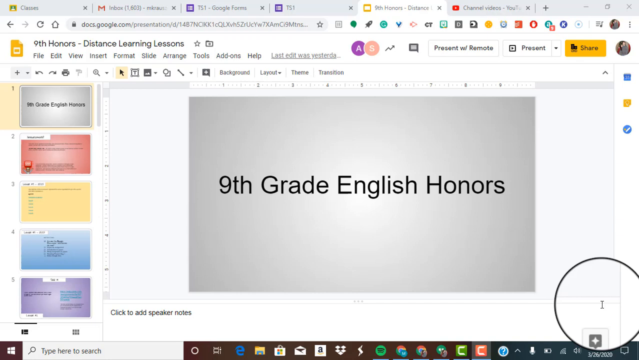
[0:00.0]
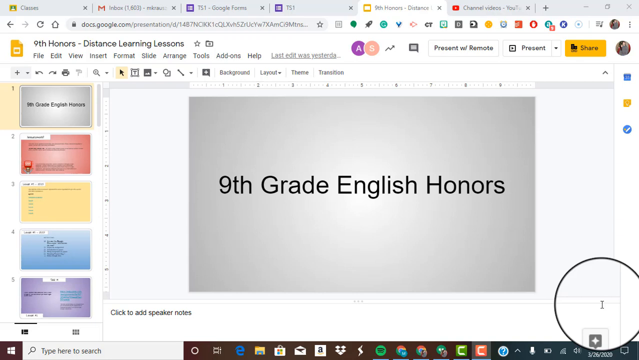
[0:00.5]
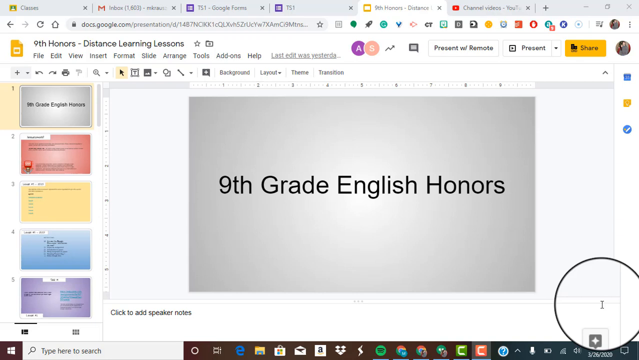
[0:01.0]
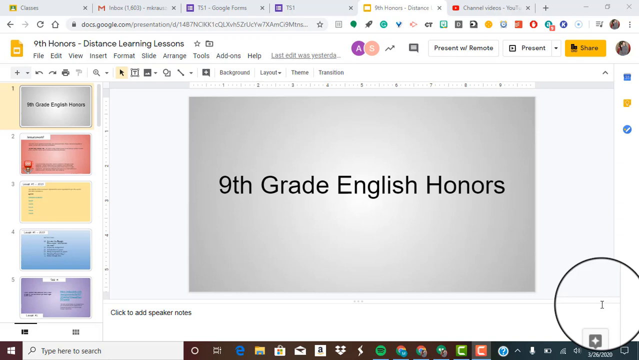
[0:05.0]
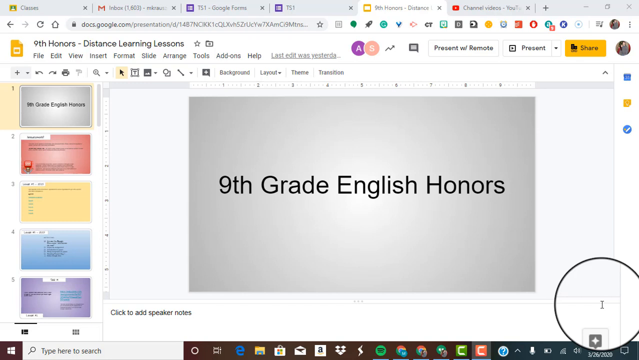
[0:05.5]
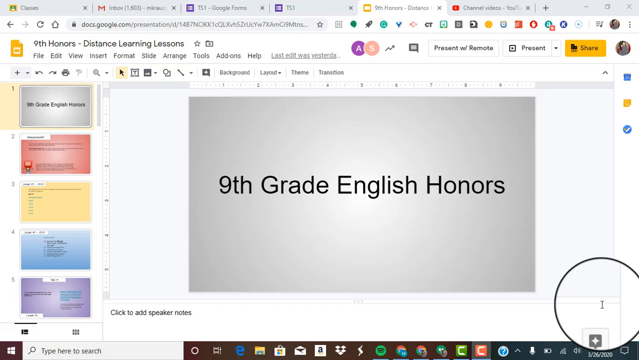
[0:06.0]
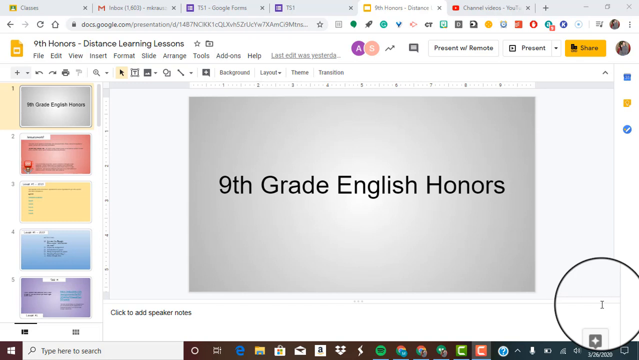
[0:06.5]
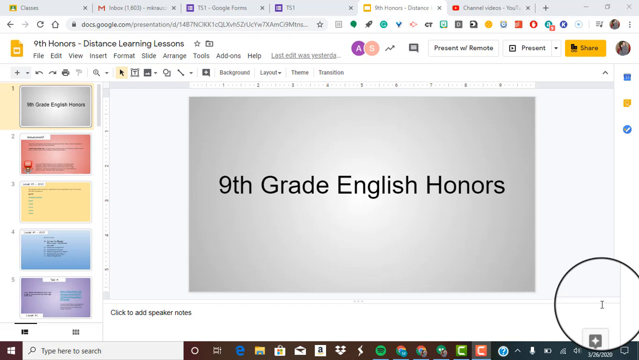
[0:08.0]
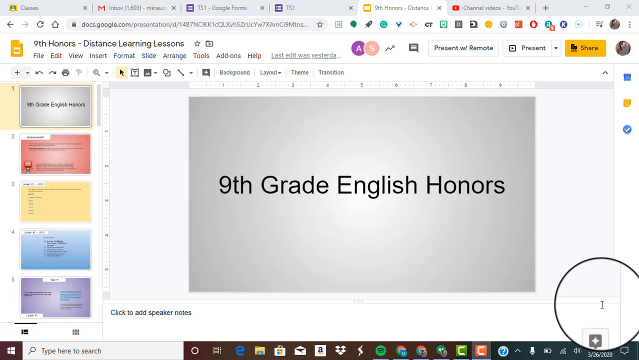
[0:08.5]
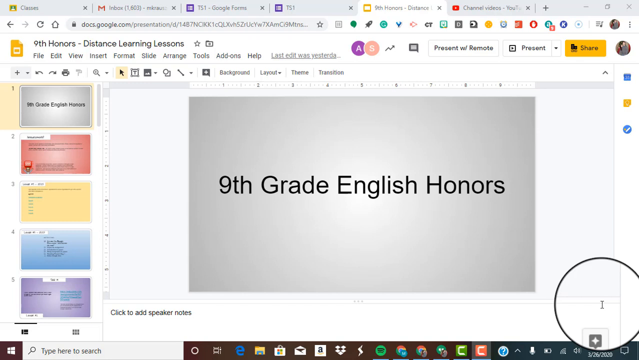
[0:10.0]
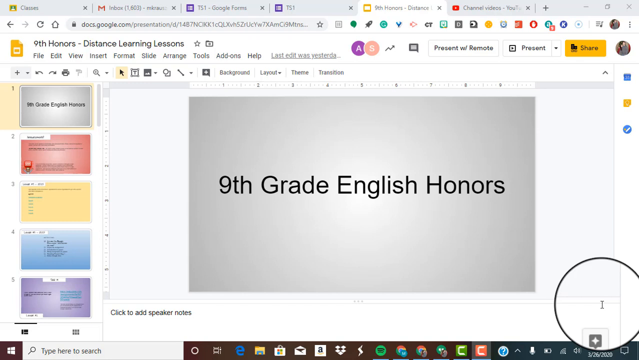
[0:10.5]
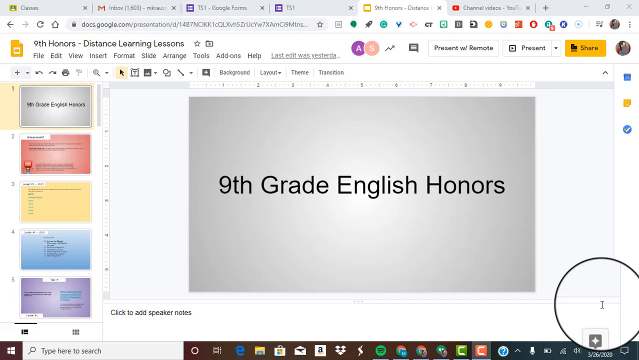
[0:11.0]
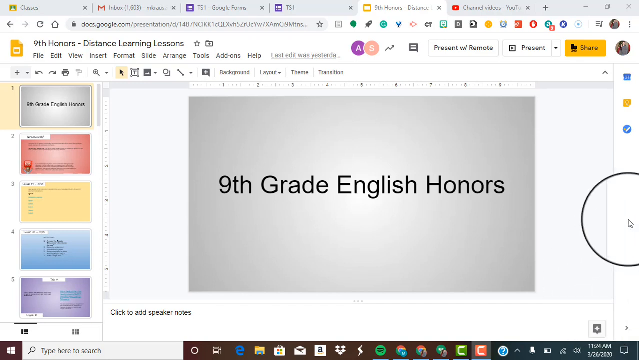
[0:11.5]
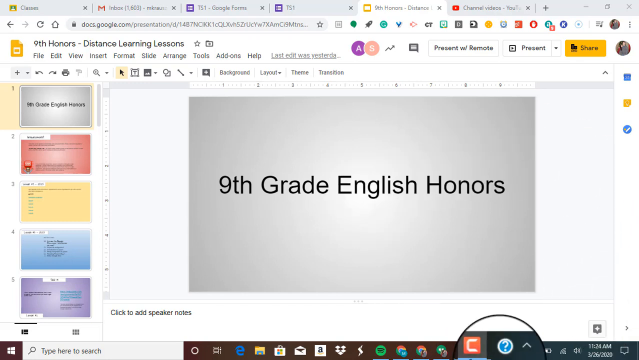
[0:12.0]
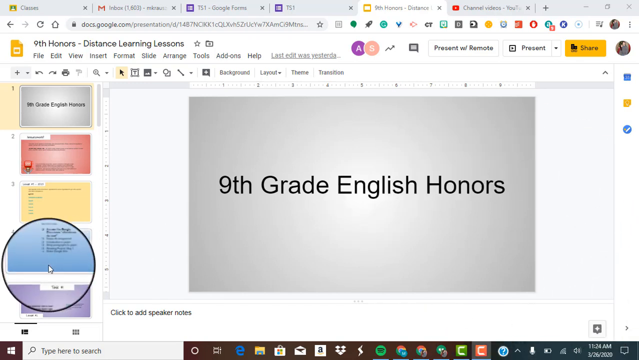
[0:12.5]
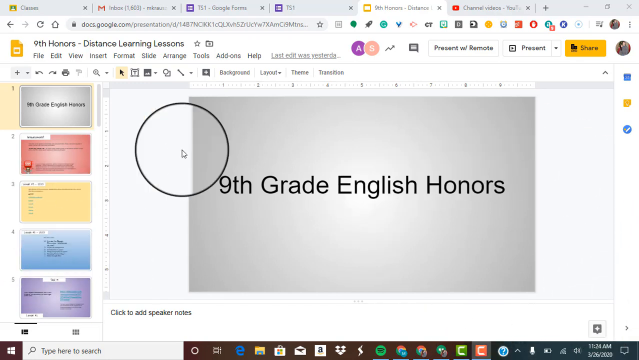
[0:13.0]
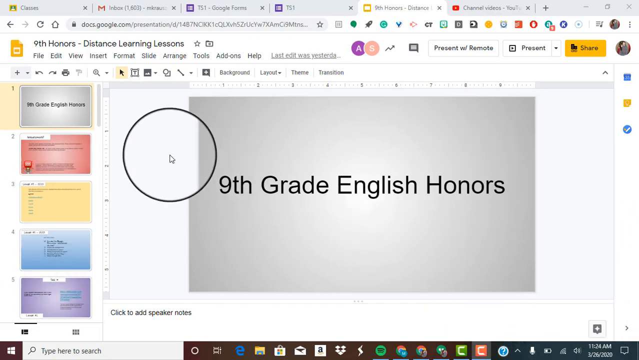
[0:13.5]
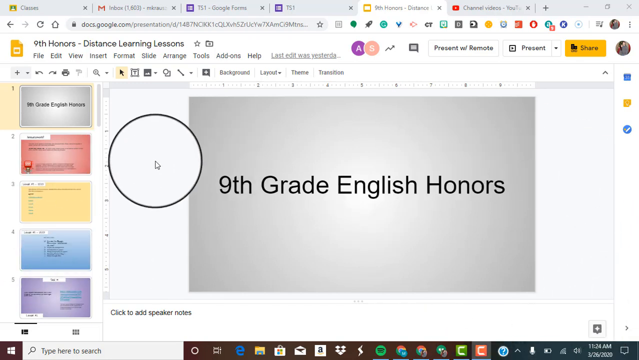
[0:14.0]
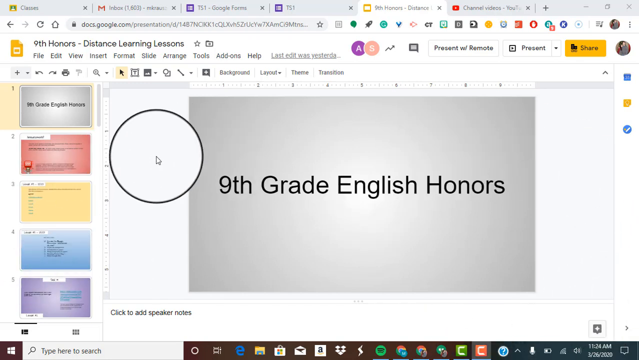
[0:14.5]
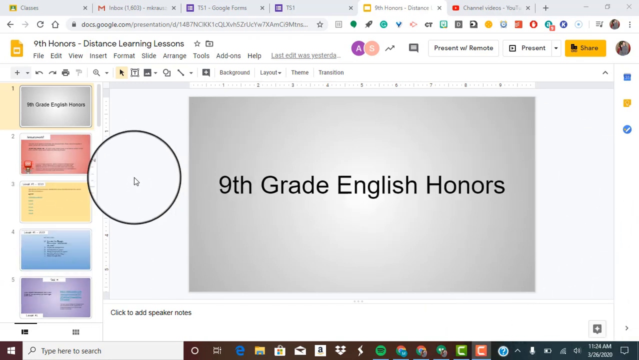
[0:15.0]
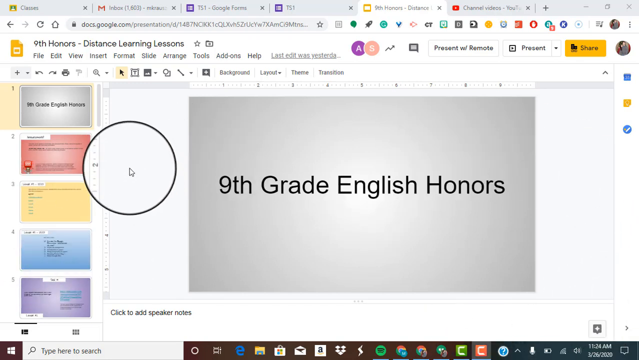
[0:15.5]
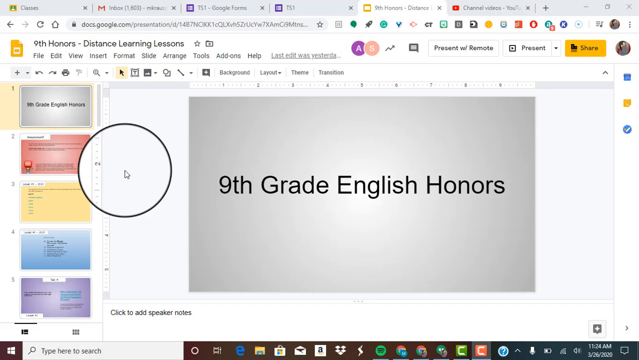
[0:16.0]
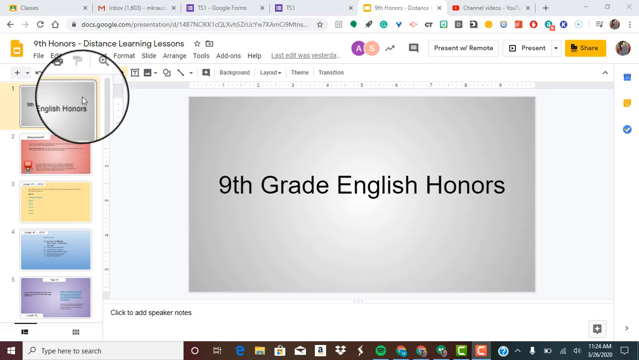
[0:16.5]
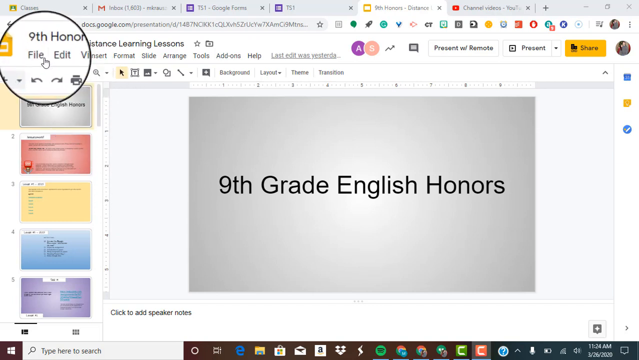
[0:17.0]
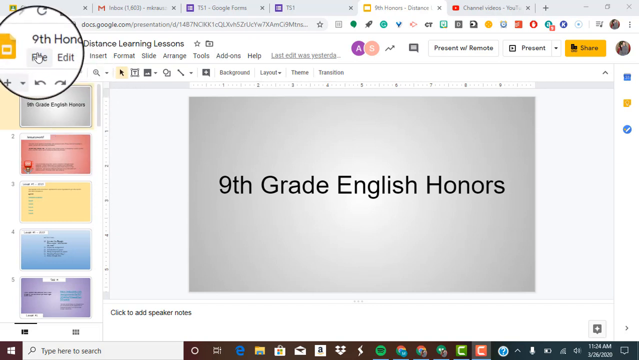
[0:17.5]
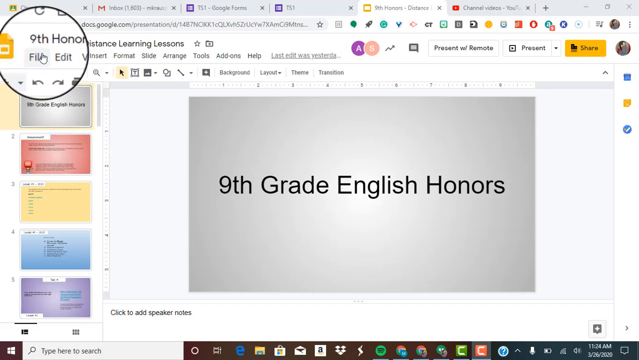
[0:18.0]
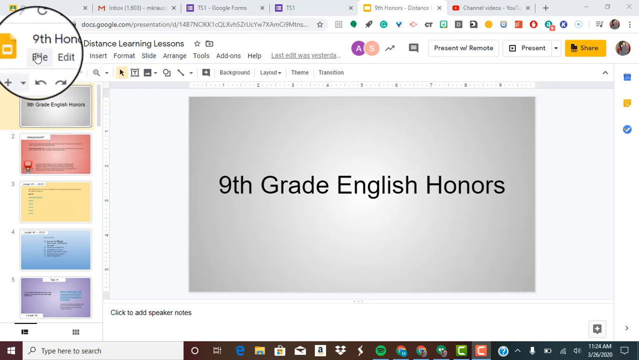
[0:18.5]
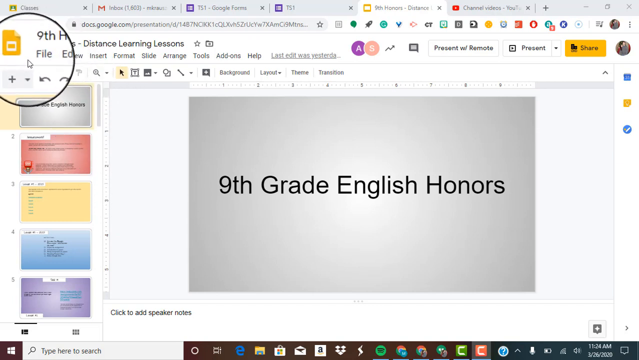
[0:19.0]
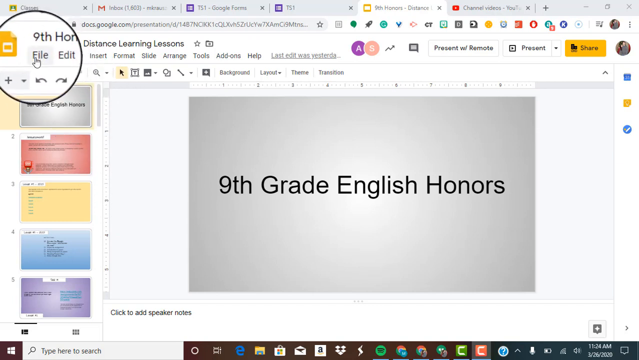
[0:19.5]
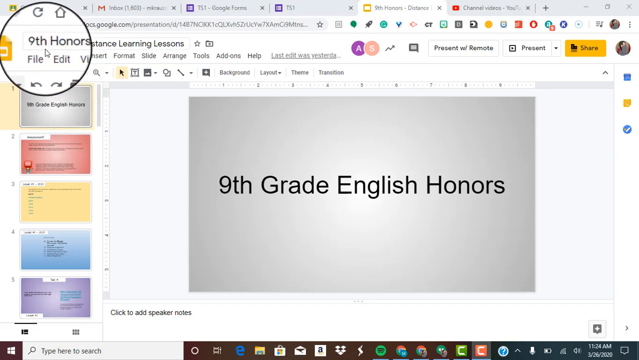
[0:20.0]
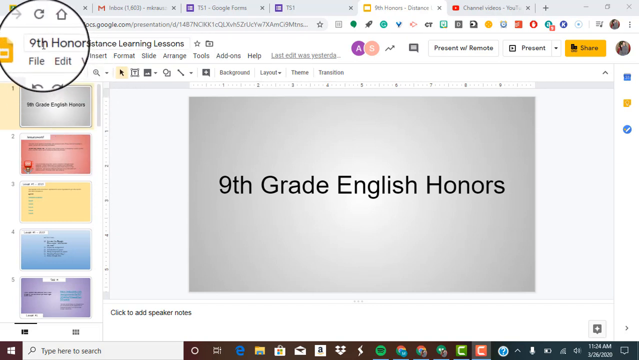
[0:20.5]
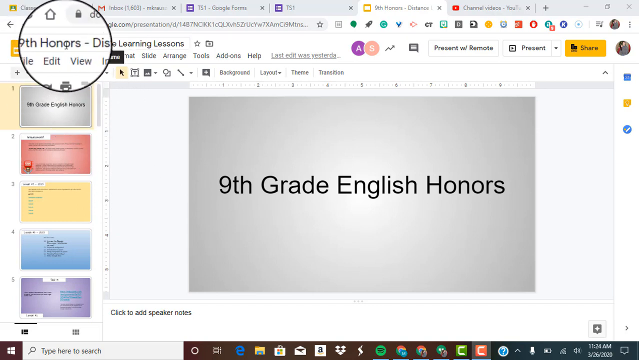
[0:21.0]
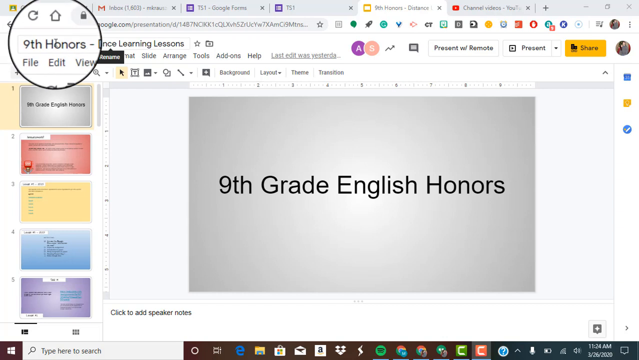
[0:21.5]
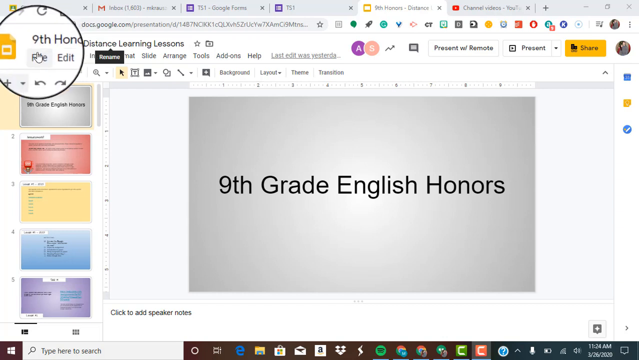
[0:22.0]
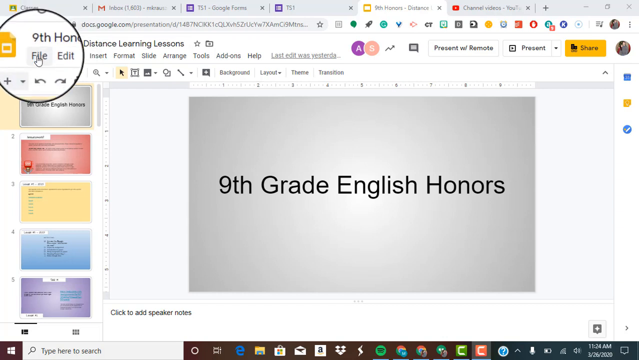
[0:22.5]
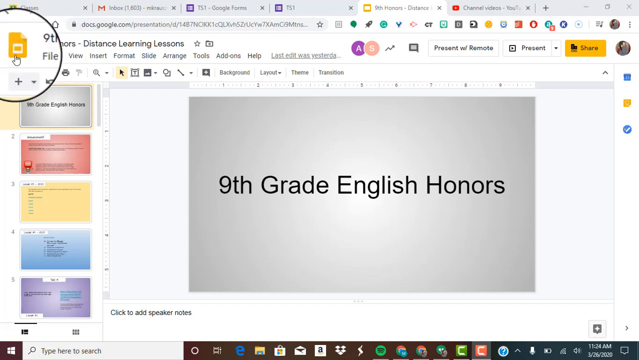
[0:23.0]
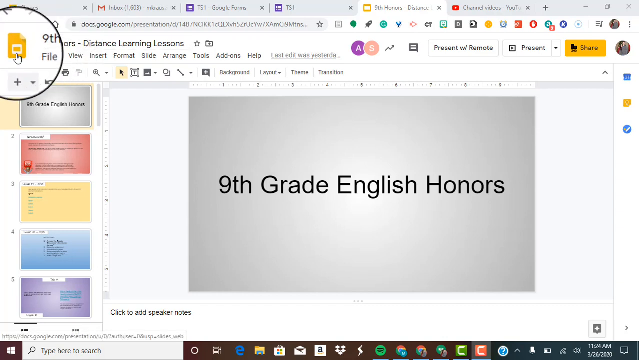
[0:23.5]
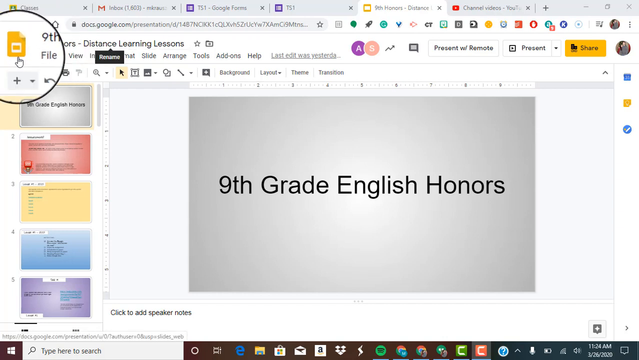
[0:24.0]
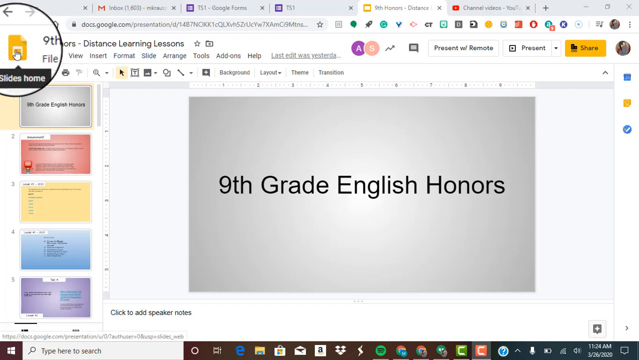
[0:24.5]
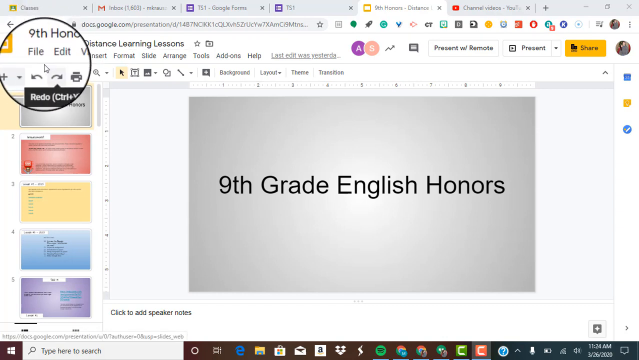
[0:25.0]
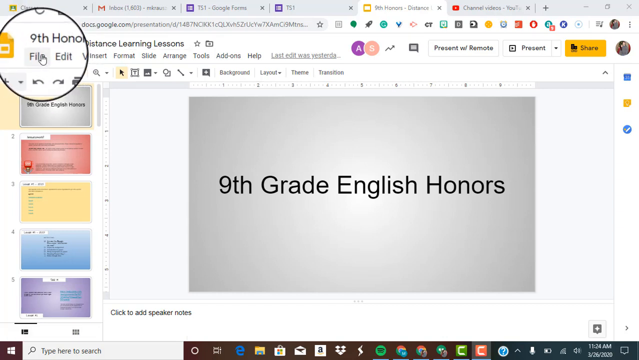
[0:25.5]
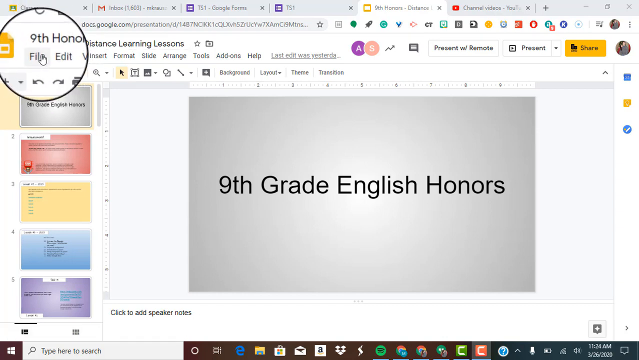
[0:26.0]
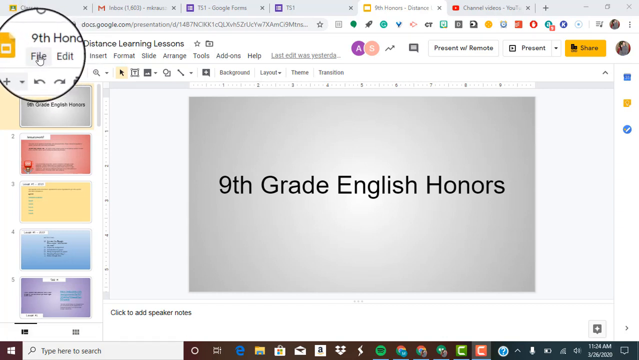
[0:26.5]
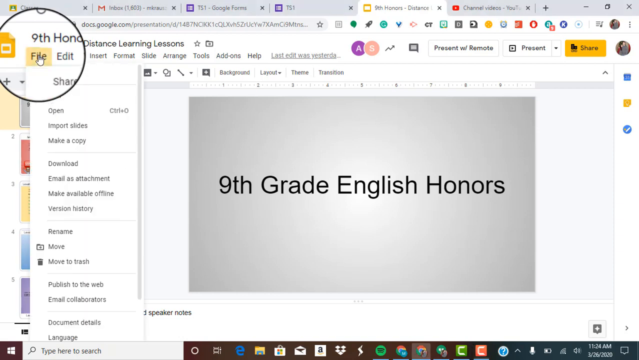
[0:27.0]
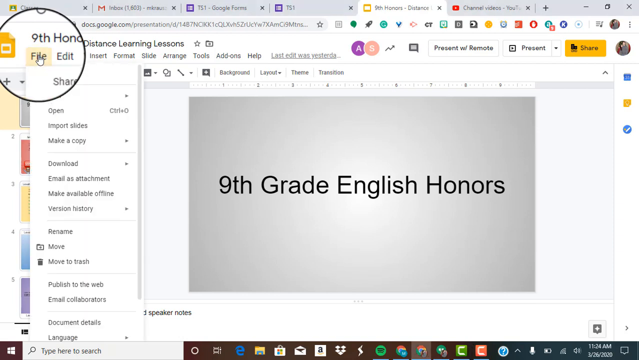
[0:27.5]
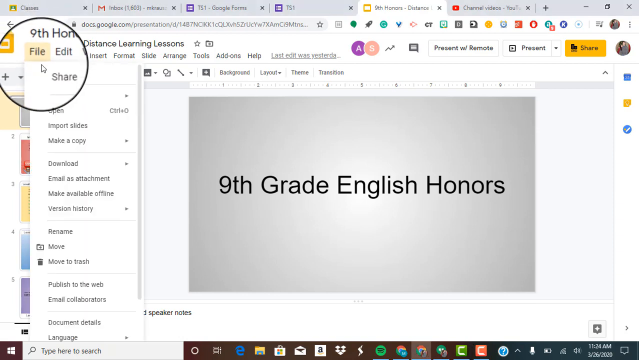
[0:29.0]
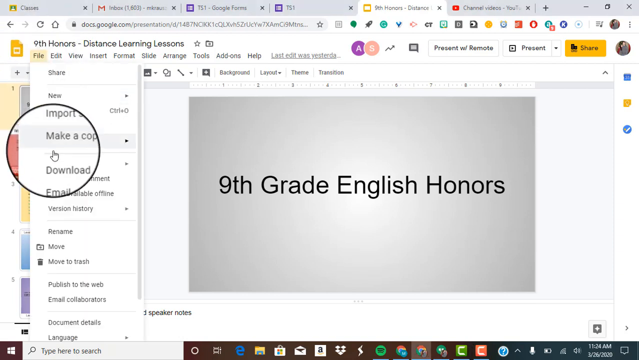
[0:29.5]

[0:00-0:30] The video shows a slideshow, identified as a Google slide in the browser bar at the top; the browser seems to be Chrome. Several tabs are open: Gmail, a couple of Google Forms, YouTube, and one that cannot be read. The first slide has a gray background with black letters reading "9th grade English honors," and the view stays on this slide. The mouse cursor is inside a circle outlined by a thin black line, which seems to magnify parts of the screen. The cursor moves to "file" and circles around it, then circles around the title above "file" and around the yellow home button. It clicks "file" and a list of options pops up.